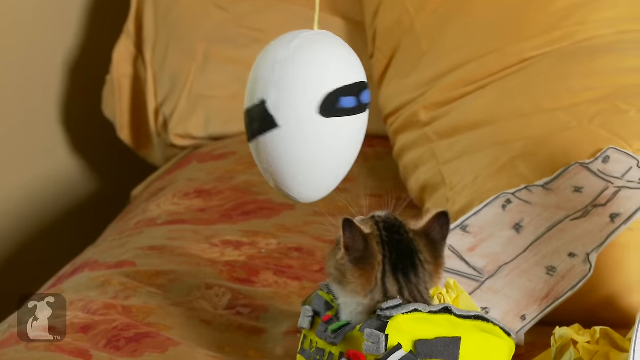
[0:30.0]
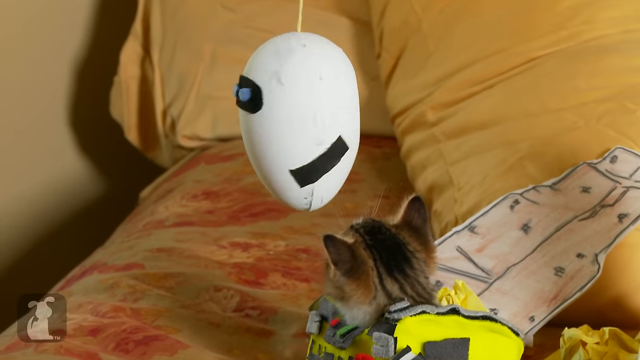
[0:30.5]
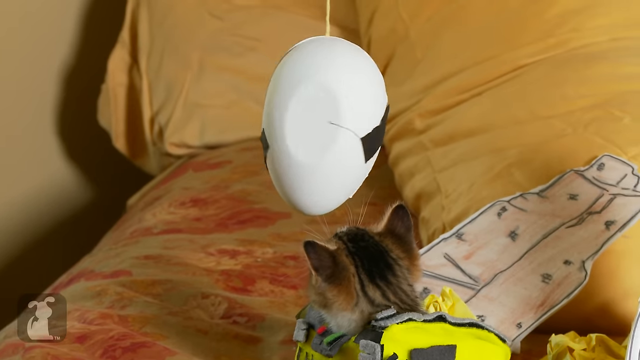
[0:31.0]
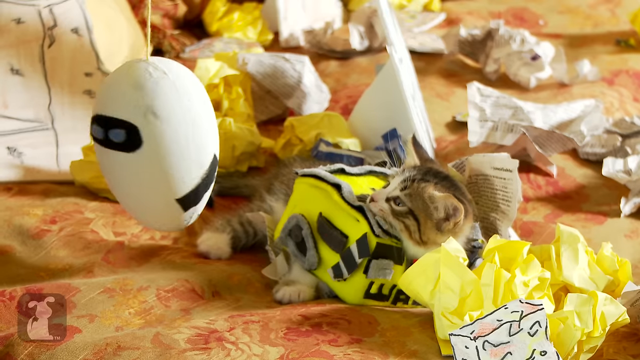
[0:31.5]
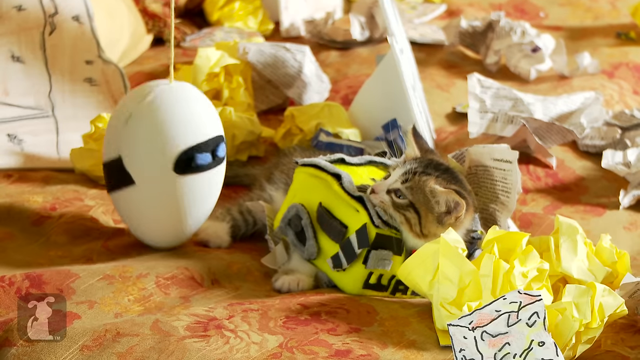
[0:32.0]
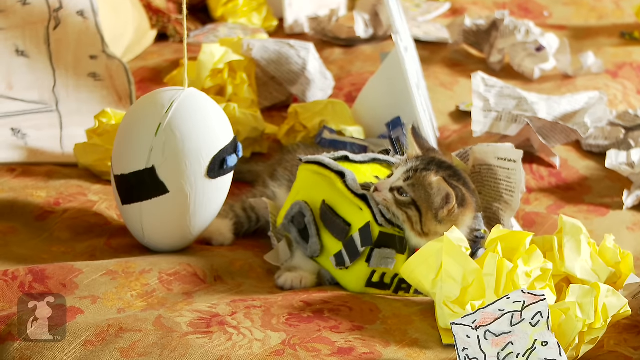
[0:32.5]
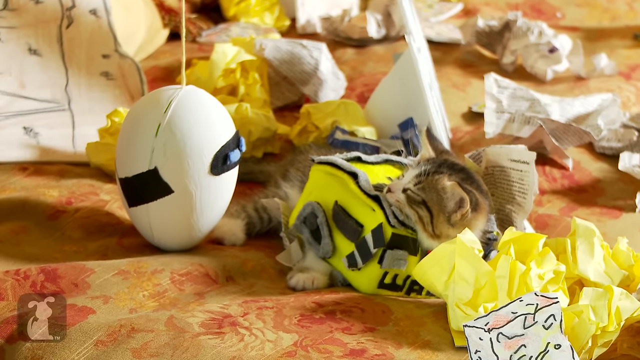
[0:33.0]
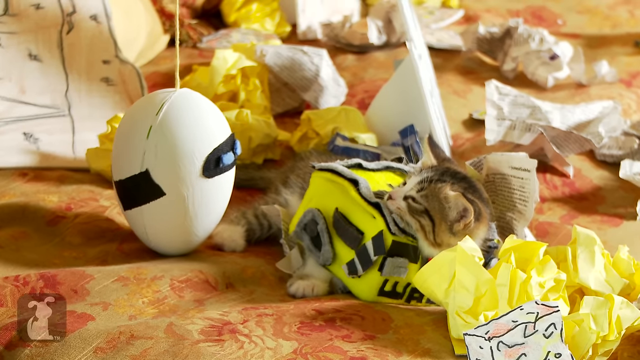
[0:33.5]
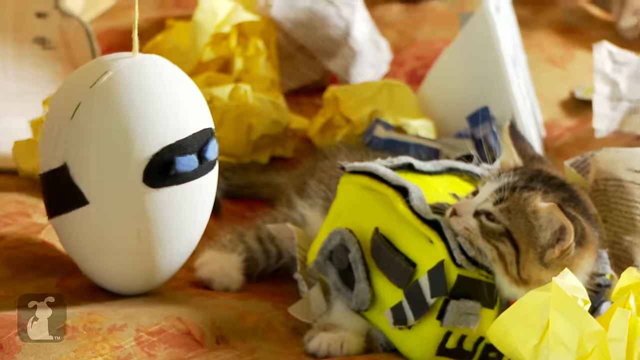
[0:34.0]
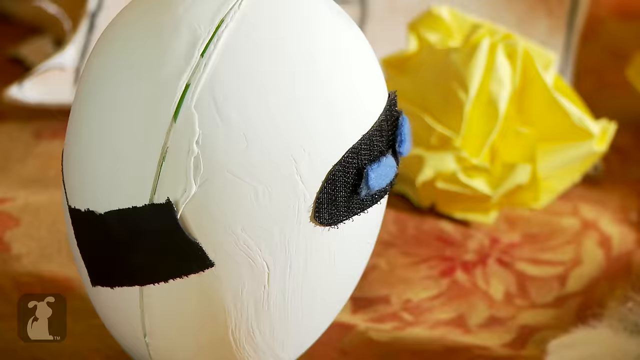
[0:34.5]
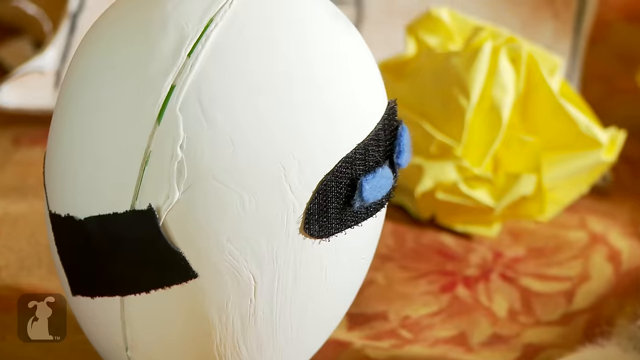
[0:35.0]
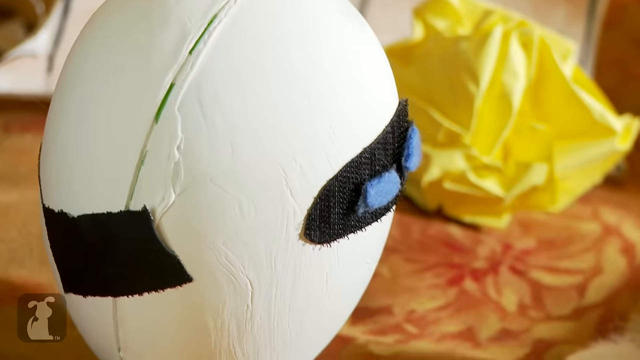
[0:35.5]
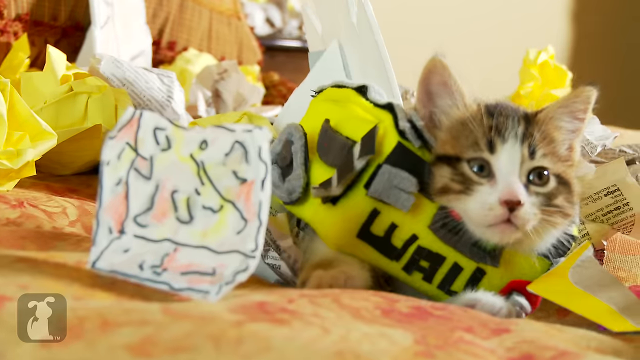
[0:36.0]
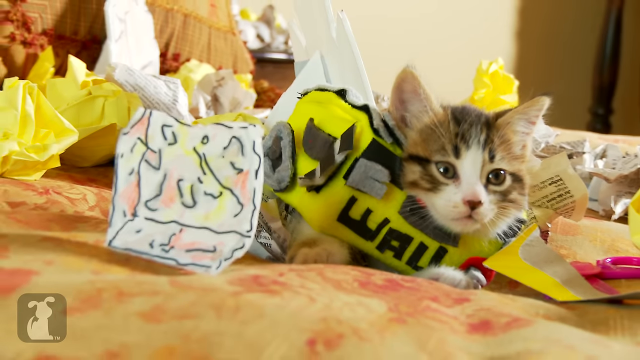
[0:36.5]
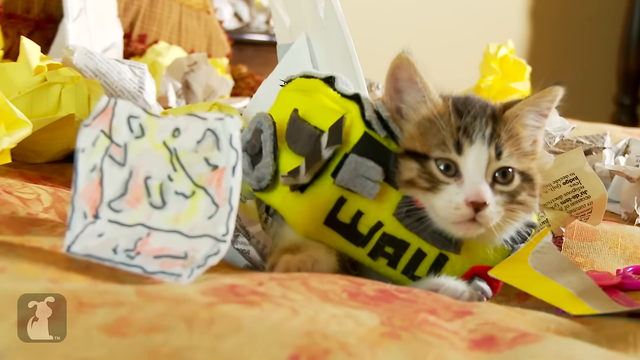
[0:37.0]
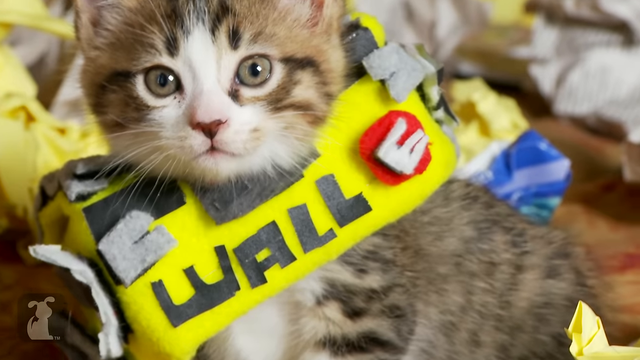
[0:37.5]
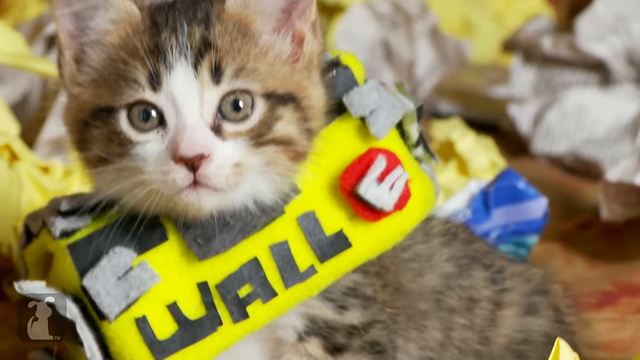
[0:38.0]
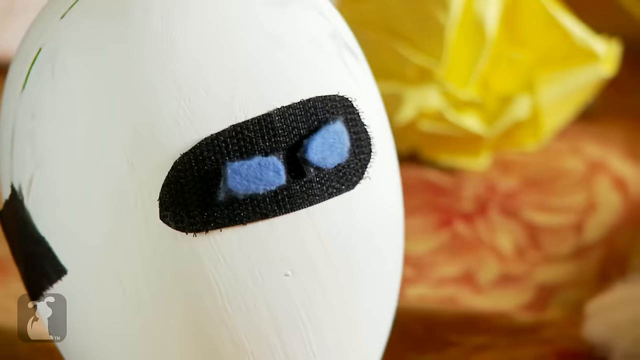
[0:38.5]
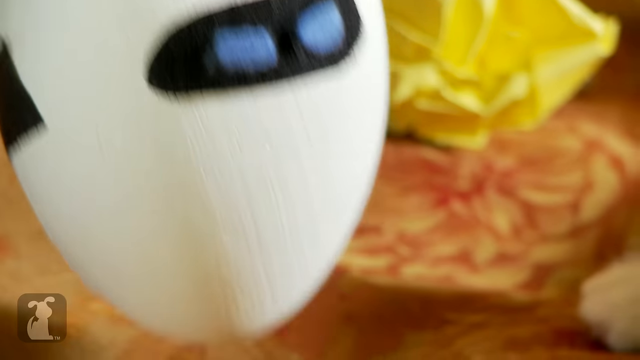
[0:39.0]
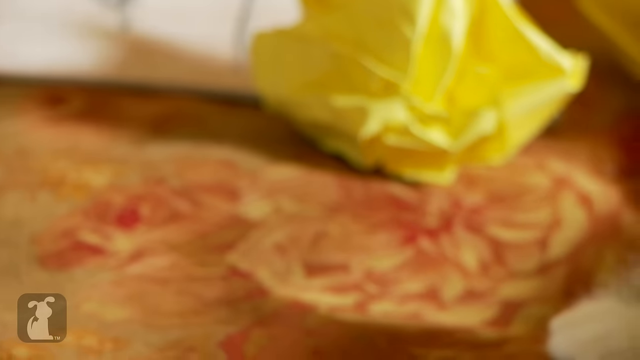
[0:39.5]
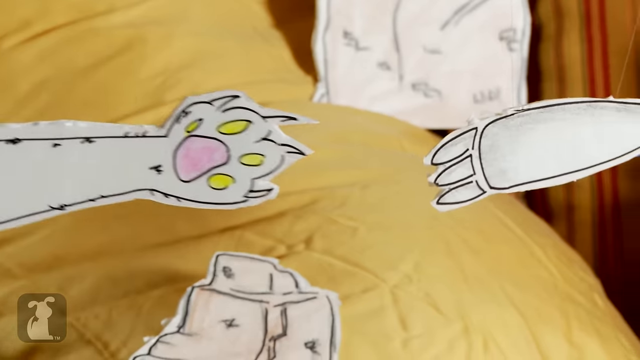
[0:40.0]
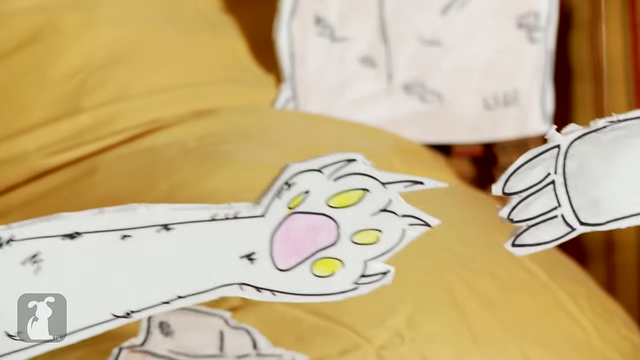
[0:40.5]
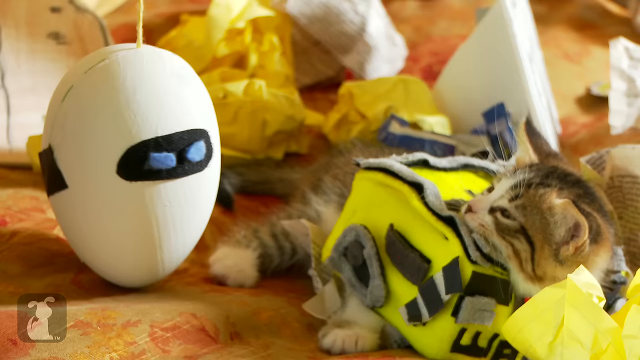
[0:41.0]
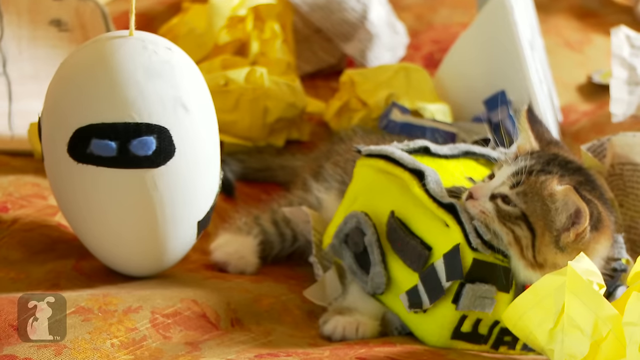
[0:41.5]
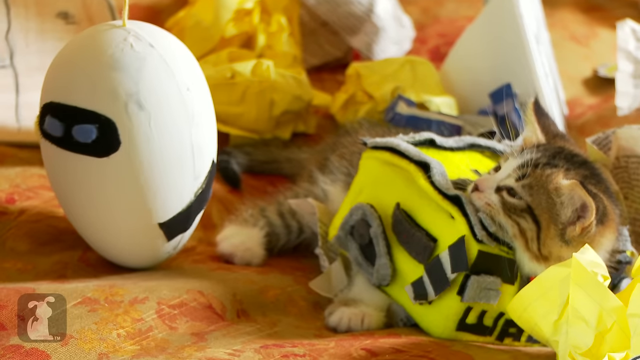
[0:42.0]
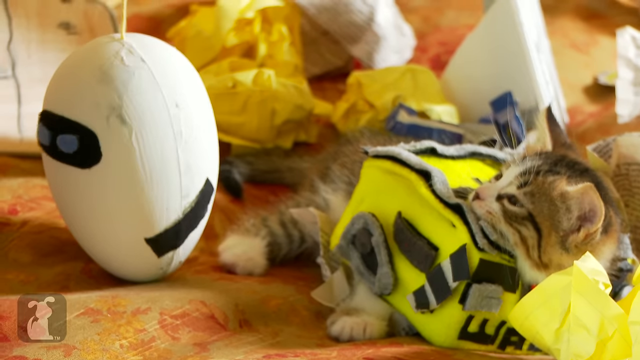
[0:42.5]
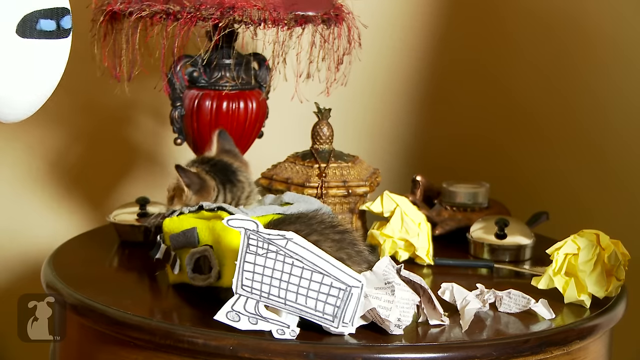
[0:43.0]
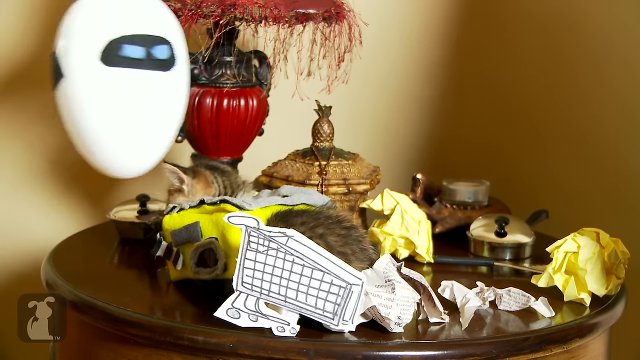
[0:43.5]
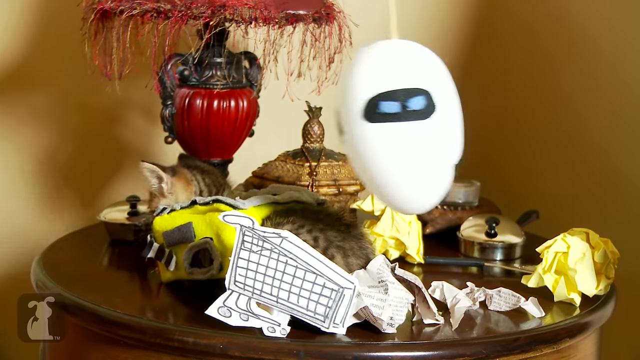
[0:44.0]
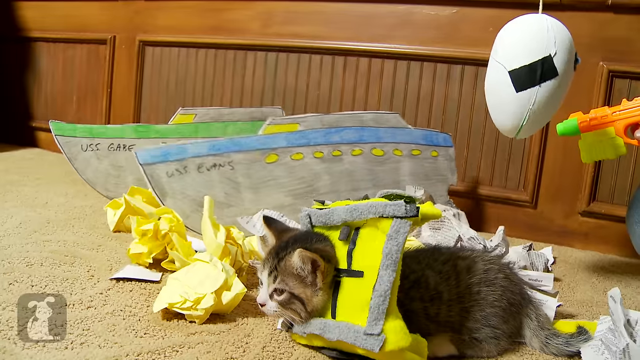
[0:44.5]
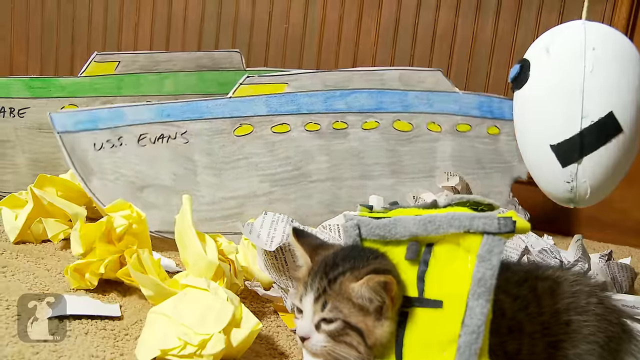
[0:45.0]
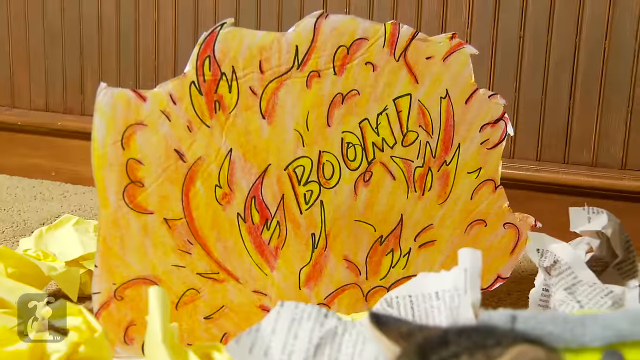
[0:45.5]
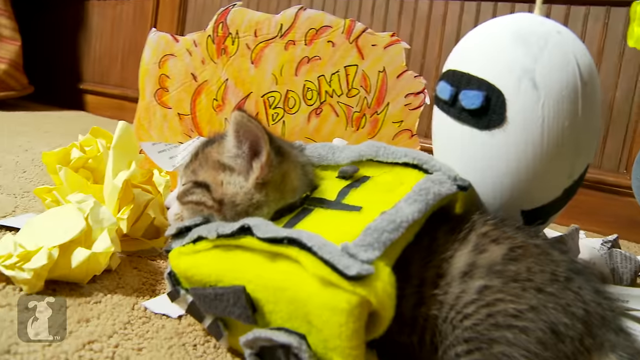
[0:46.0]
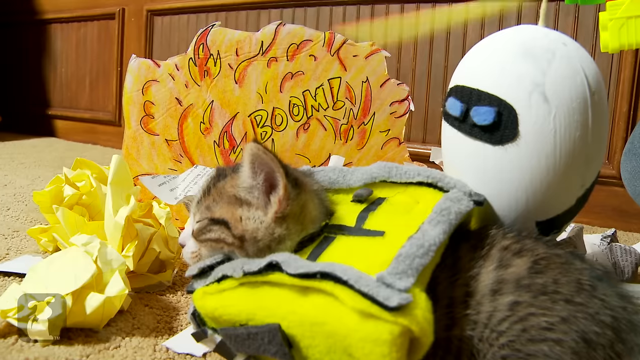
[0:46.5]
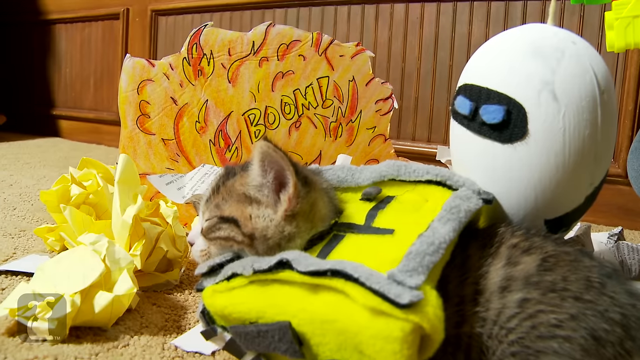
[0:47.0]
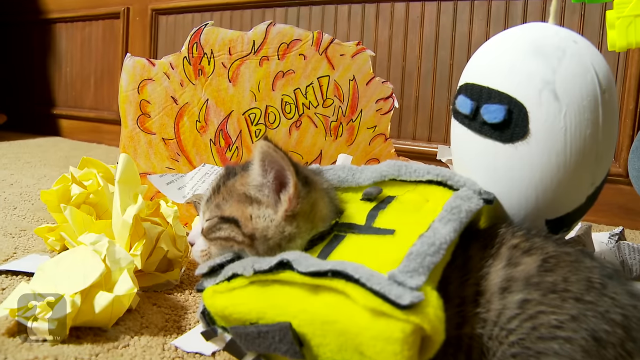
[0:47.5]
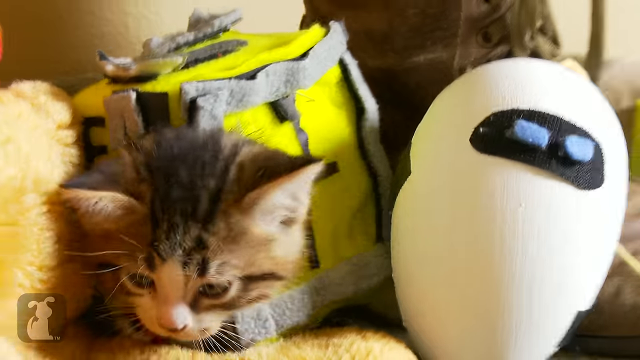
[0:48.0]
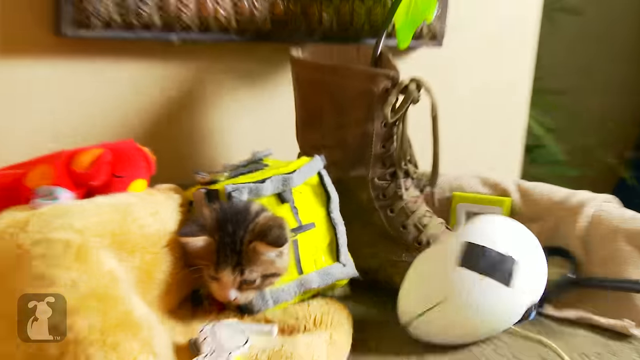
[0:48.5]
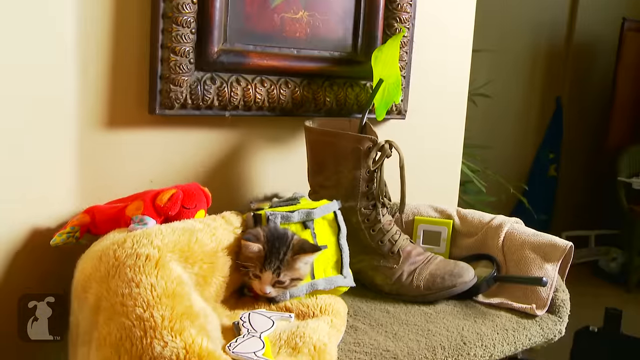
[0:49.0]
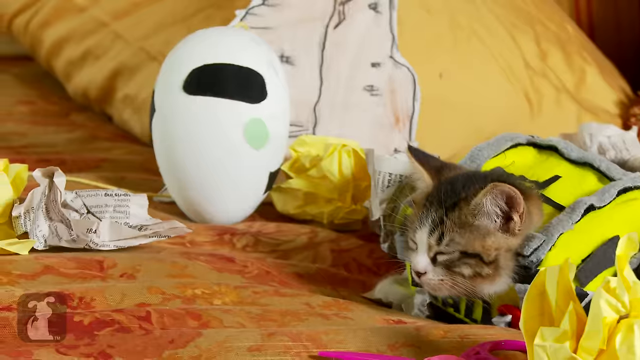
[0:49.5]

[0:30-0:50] A spherical, almost egg-shaped object attached to a string spins around in front of the cat. The cat looks at it almost puzzled, not knowing what it is, but it does not seem scared. Trash is still around, like crumpled paper of different colors. The cat turns to look at the camera, and a drawn paw with its claws extended reaches out from the left side of the screen, trying to make contact with another object emerging from the right side, which is more of a robotic hand, also drawn. In the back there is a drawn explosion that says "boom", while somebody seems to be throwing paper at it.